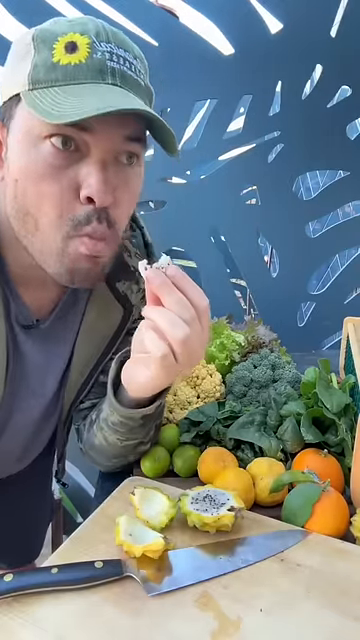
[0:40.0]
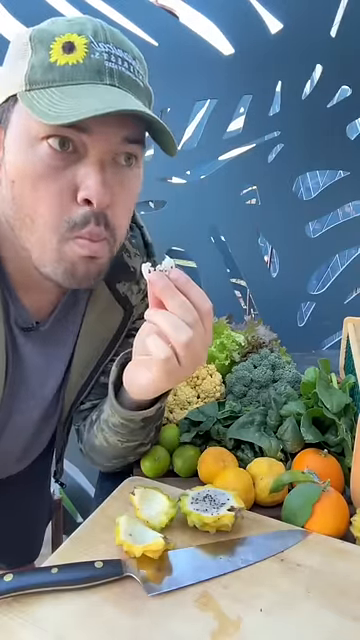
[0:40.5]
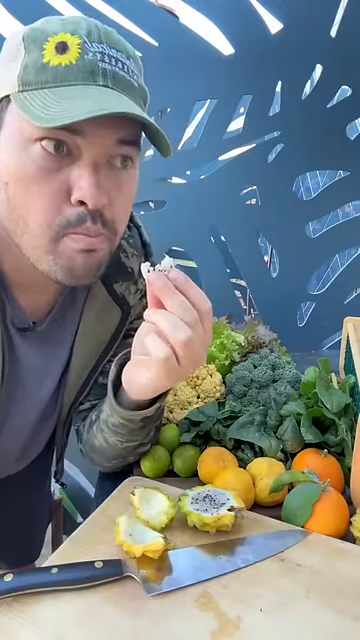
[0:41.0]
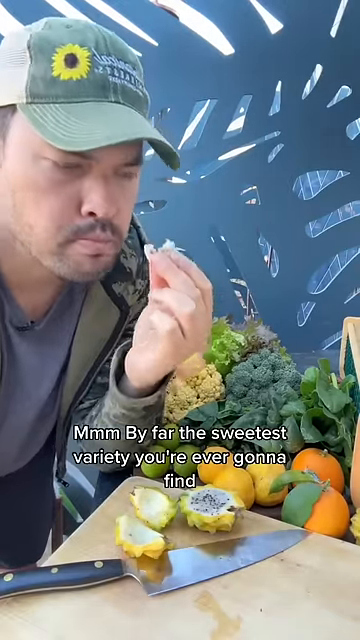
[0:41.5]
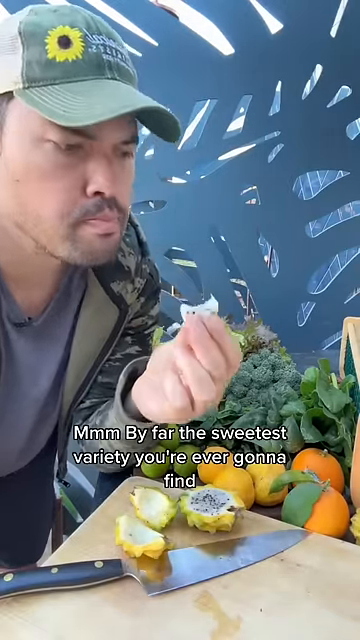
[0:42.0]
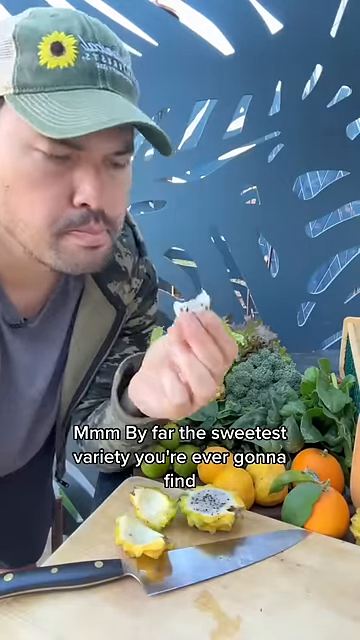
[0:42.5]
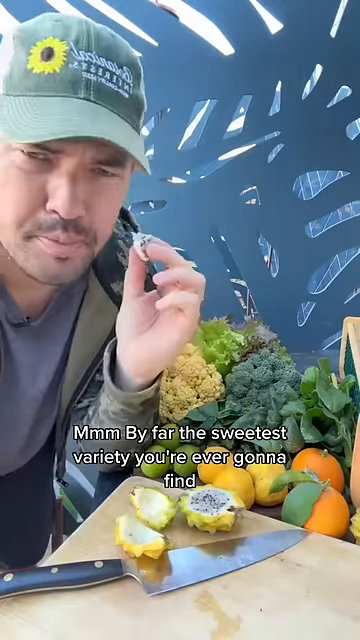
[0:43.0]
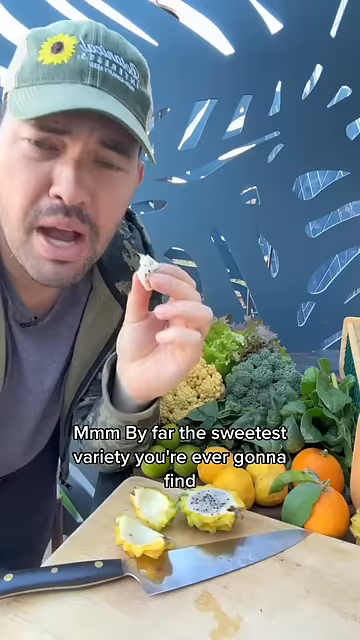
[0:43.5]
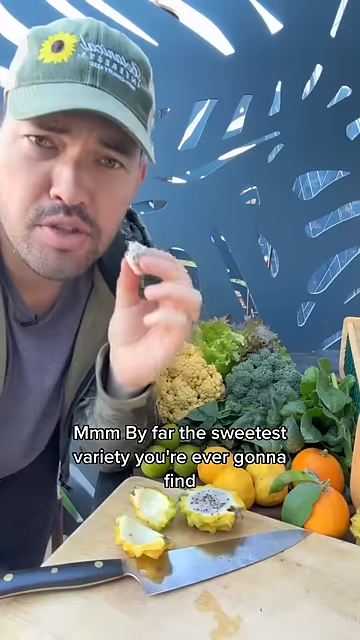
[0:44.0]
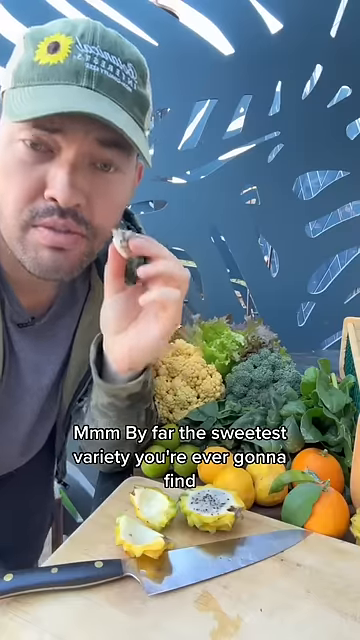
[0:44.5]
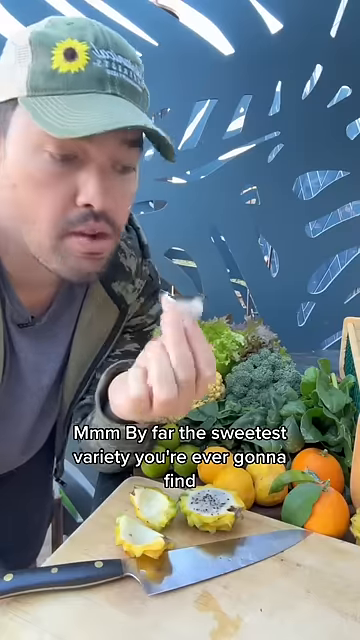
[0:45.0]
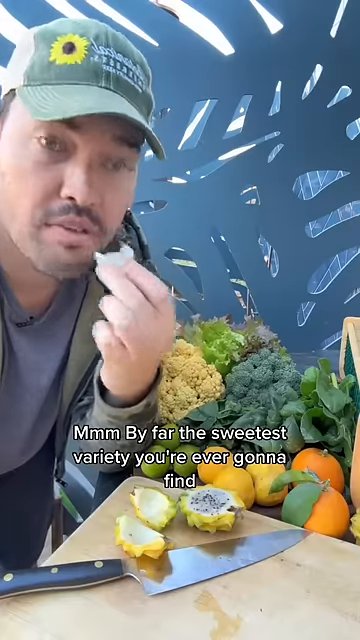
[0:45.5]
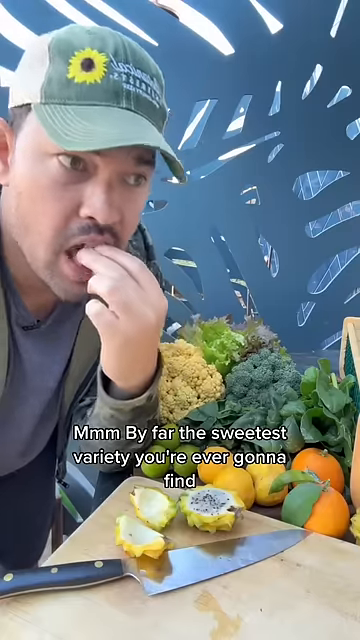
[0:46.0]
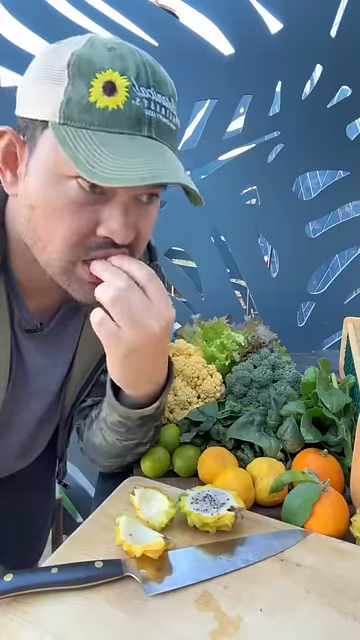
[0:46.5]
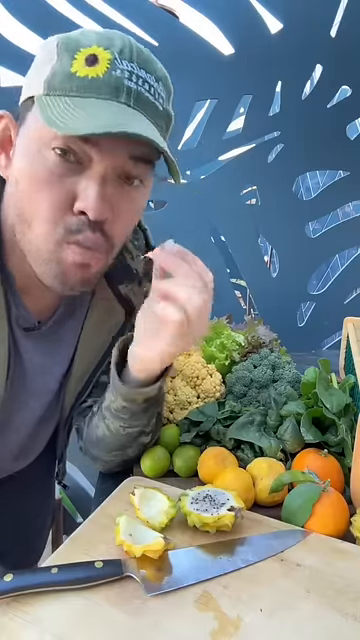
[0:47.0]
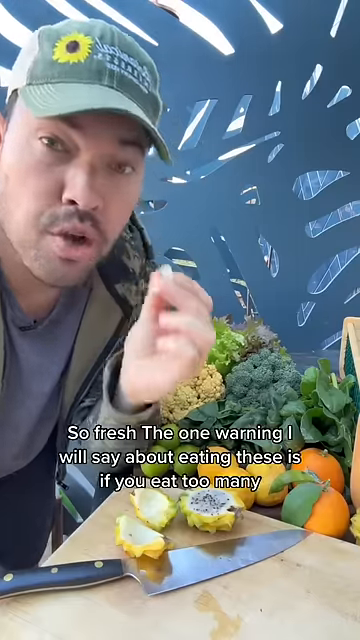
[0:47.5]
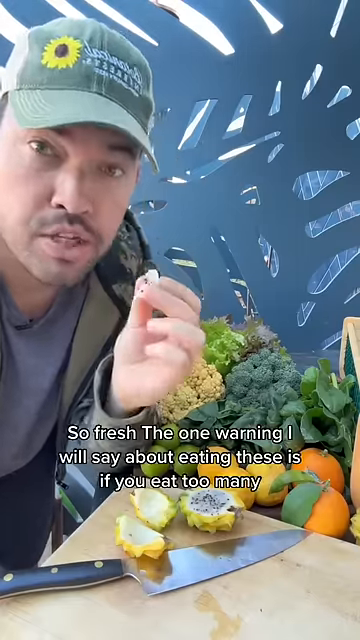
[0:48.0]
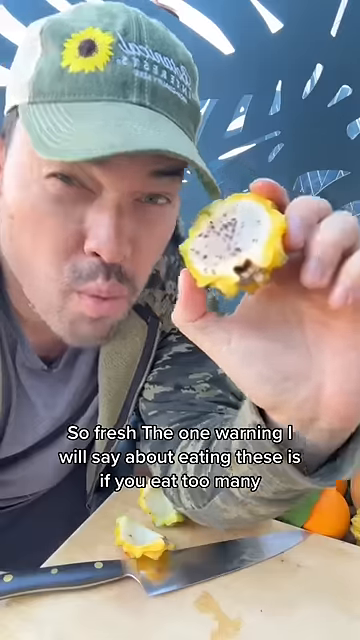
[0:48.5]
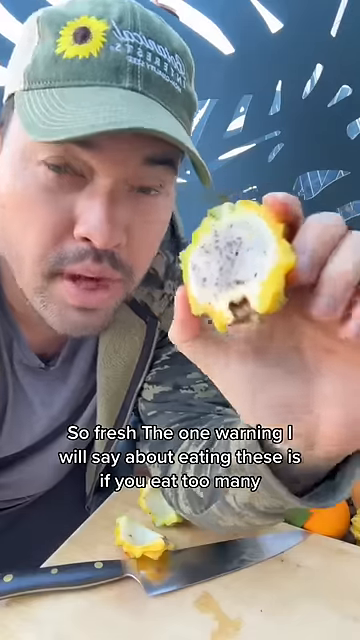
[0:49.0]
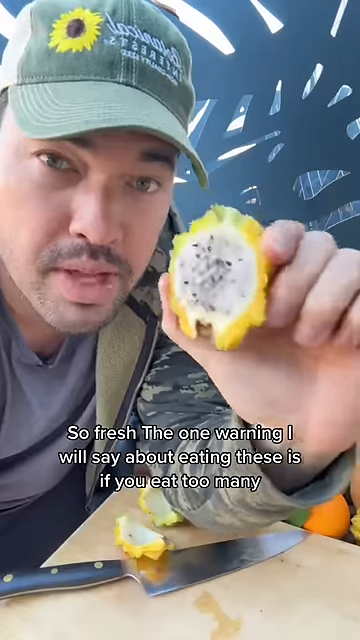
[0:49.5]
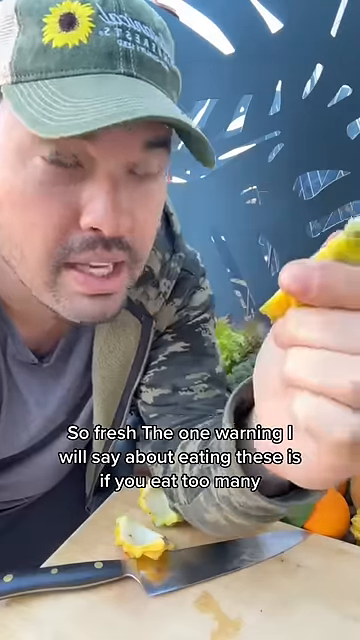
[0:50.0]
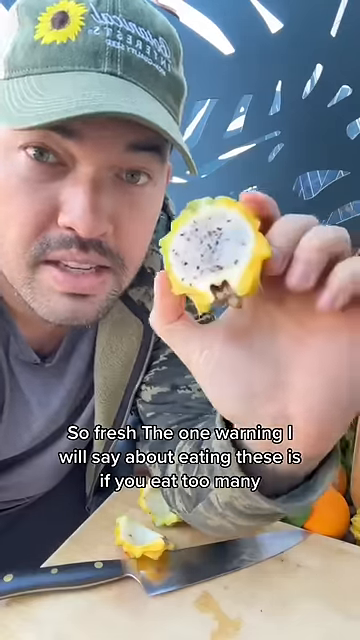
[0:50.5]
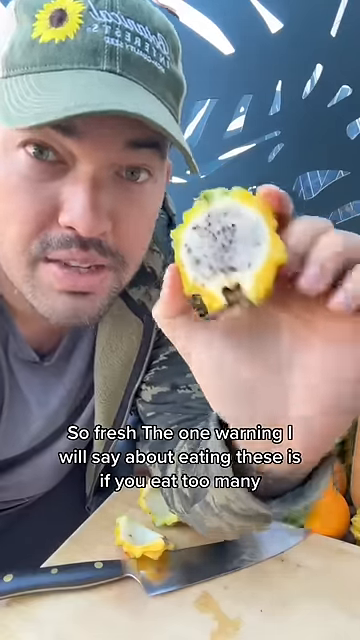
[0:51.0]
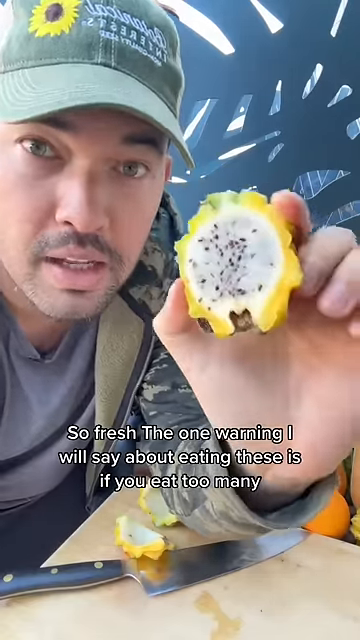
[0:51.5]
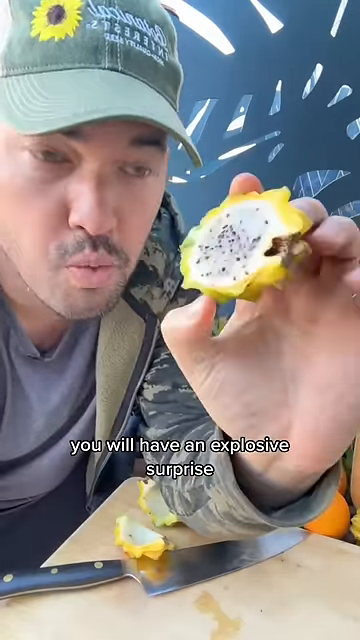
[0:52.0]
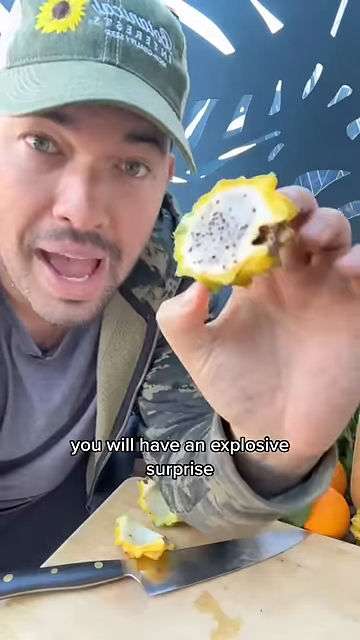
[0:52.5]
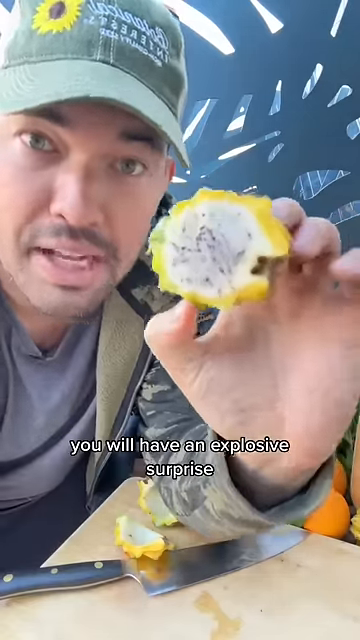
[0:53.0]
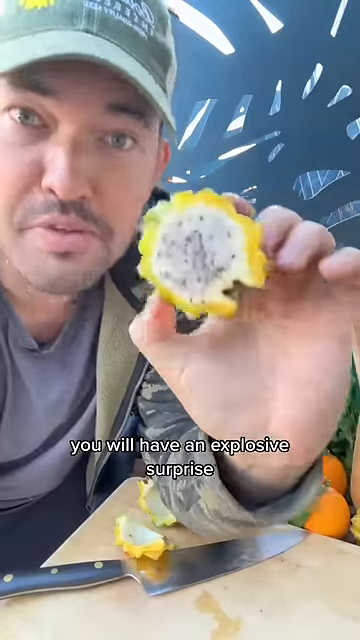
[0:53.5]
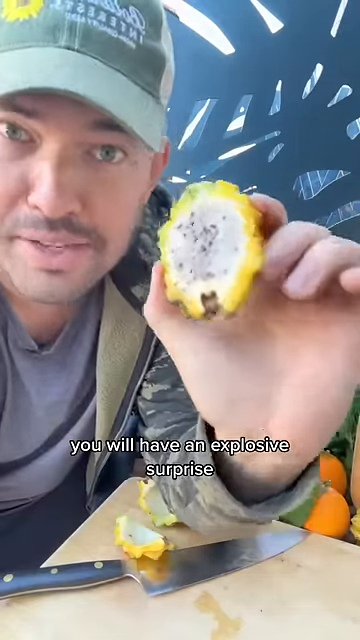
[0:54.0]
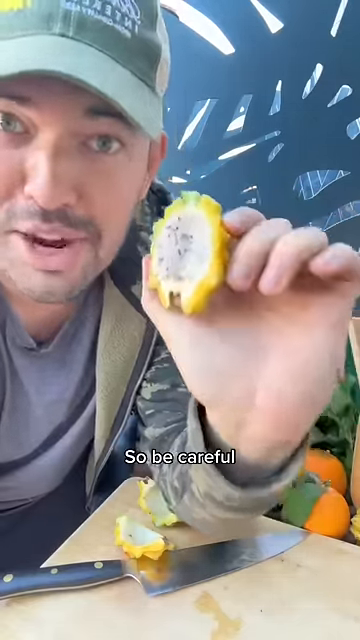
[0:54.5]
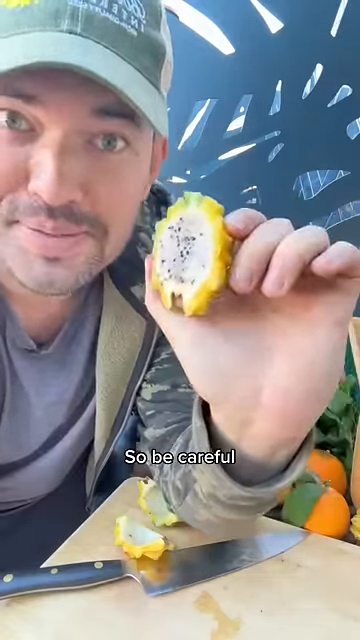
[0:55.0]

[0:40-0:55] The same man is still chewing the bit of dragon fruit, then takes another bite from the piece he is still holding in his hand; his facial expression shows he finds it delicious. White subtitles say it's by far the sweetest variety you're going to find, but to be careful not to eat too much or you're going to have an explosive surprise. It is a single static shot of him leaning forward into the camera's view, with the cutting board and knife in the foreground; he is kind of hunched over the cutting board to fit into frame as he eats. He then holds another slice up to the camera and talks while looking directly at the camera. He appears to be outside, maybe in his garden. In the background behind him, a lot of fruit and vegetables are stacked up, probably in some kind of cart or tray, including oranges and yellow and green fruits.